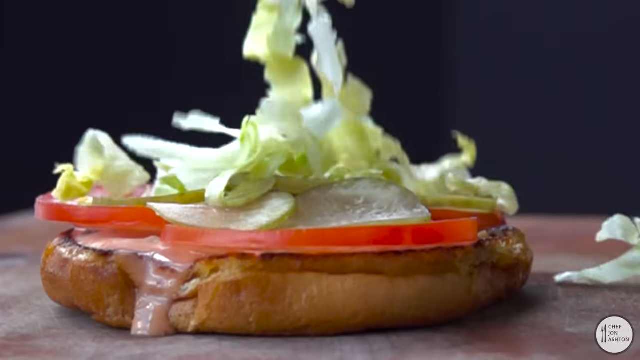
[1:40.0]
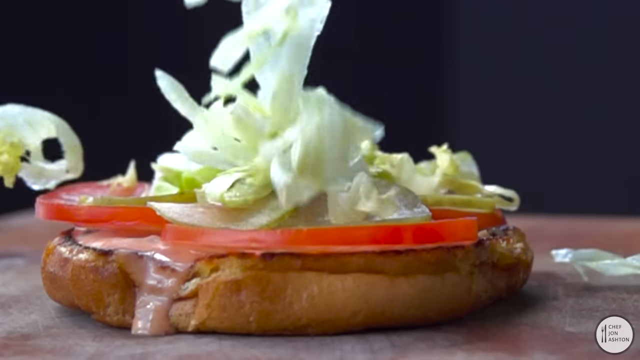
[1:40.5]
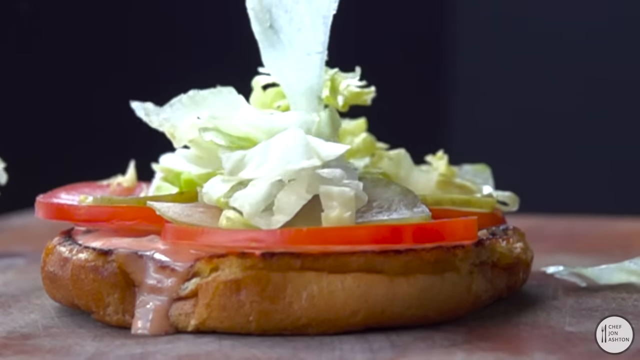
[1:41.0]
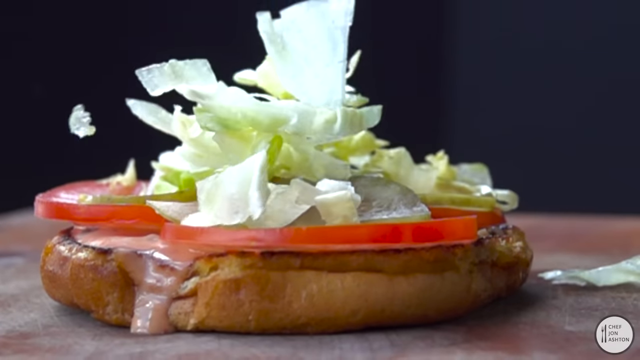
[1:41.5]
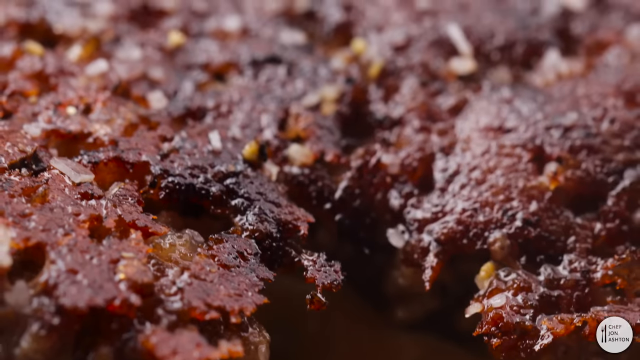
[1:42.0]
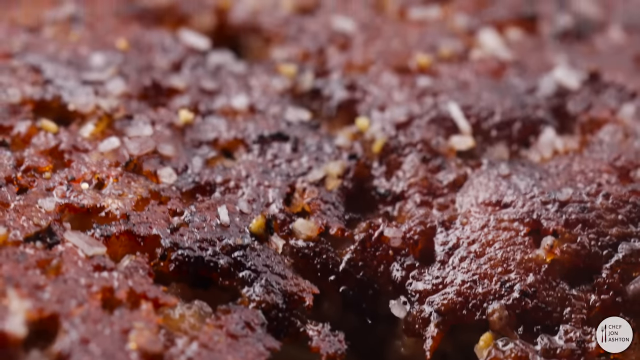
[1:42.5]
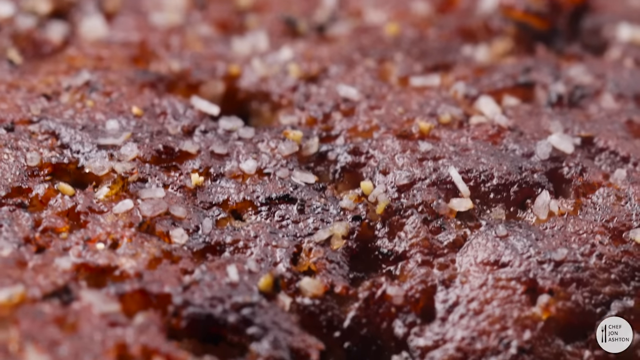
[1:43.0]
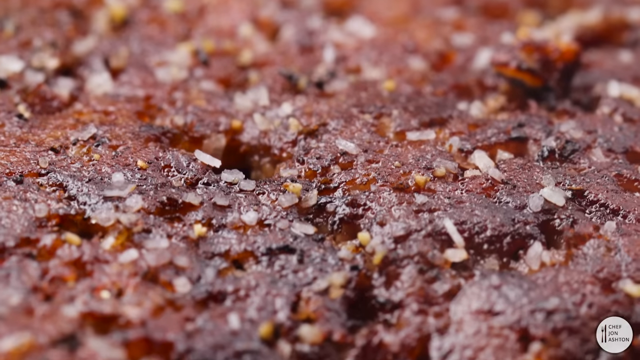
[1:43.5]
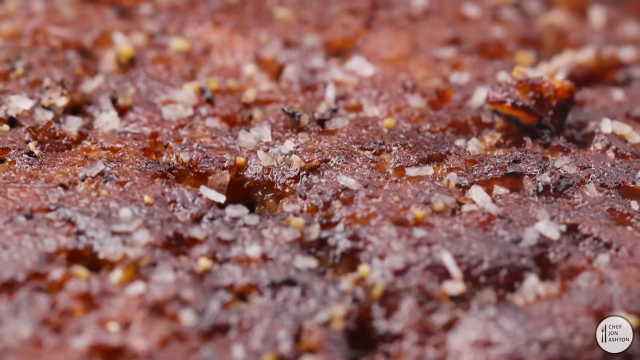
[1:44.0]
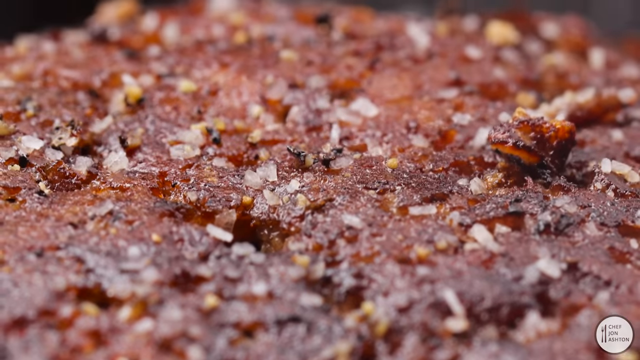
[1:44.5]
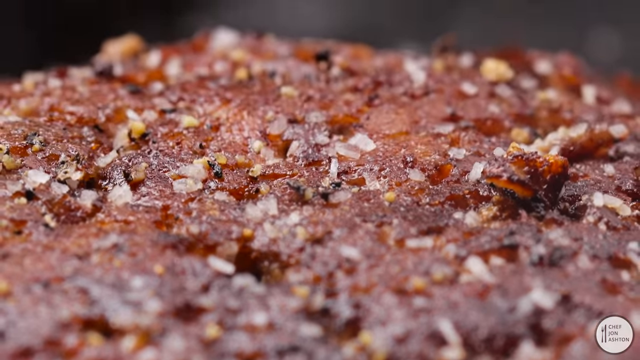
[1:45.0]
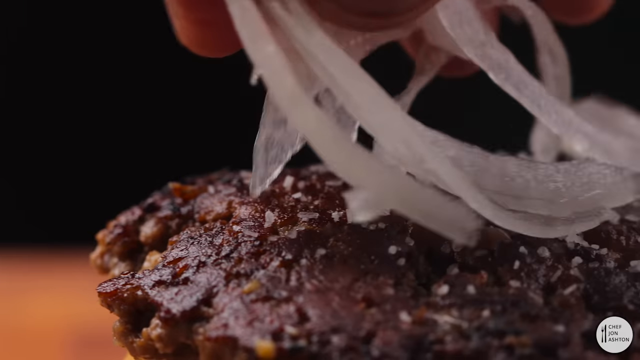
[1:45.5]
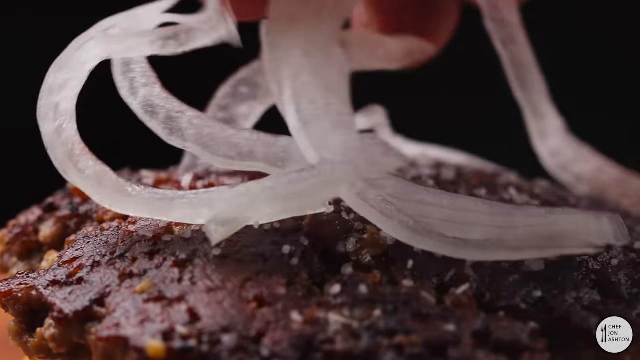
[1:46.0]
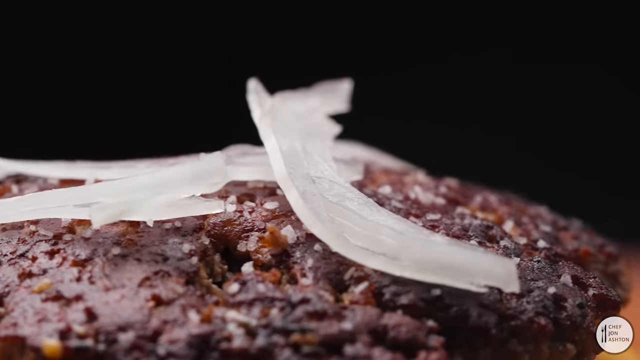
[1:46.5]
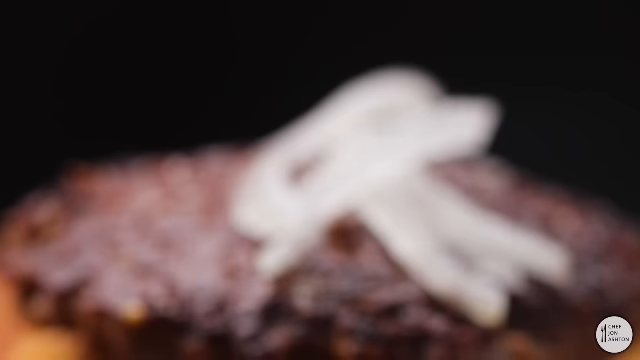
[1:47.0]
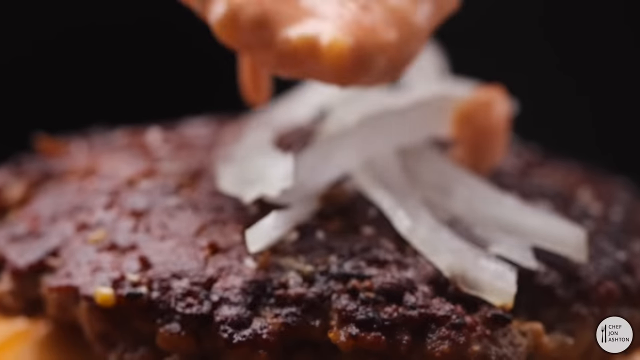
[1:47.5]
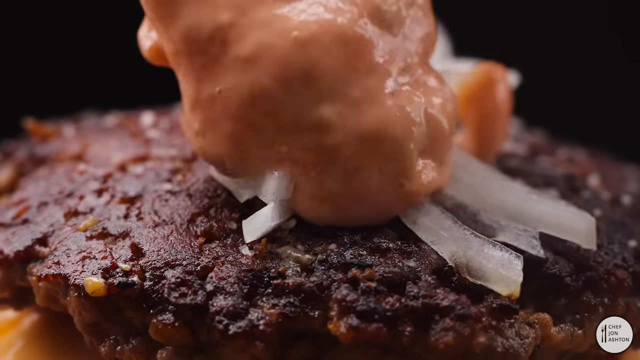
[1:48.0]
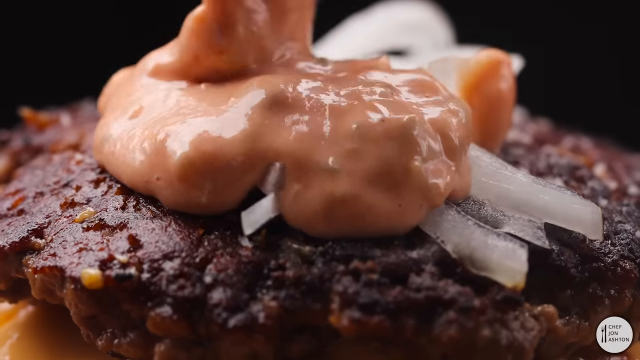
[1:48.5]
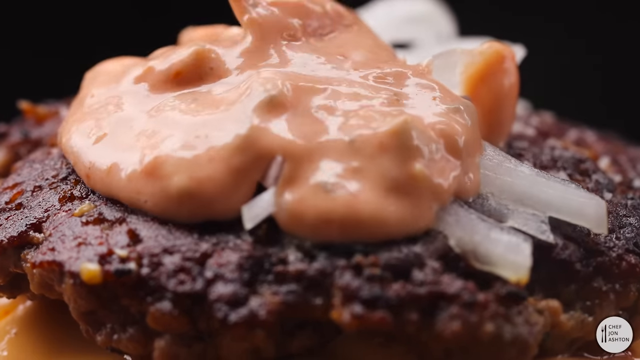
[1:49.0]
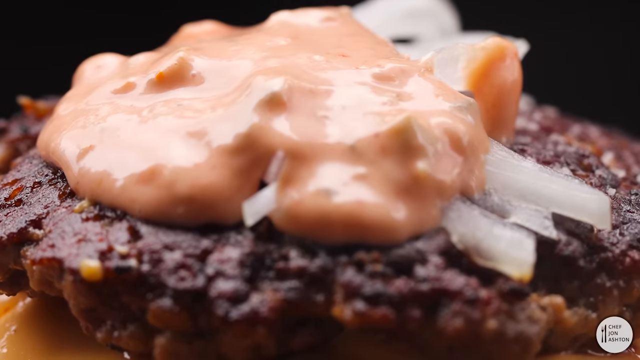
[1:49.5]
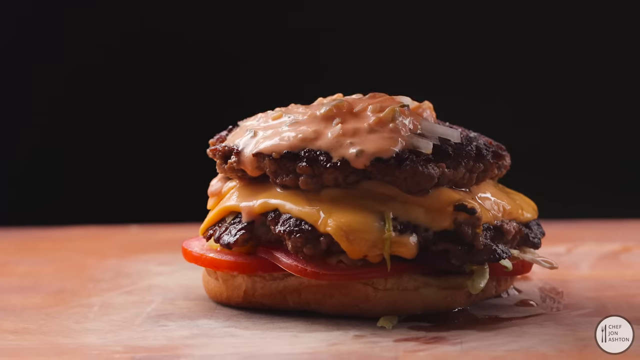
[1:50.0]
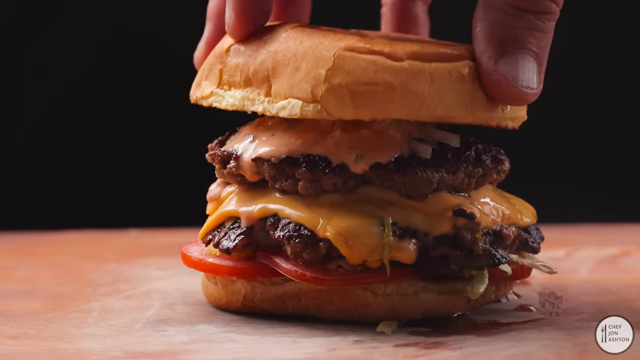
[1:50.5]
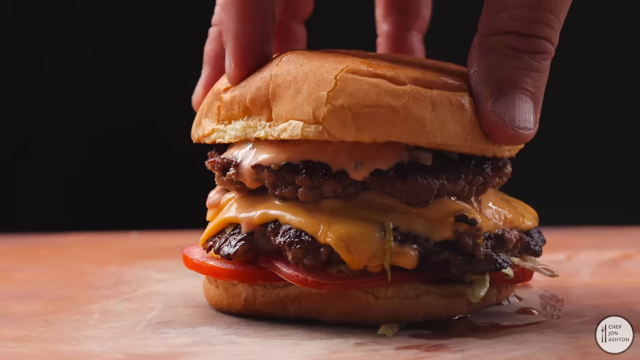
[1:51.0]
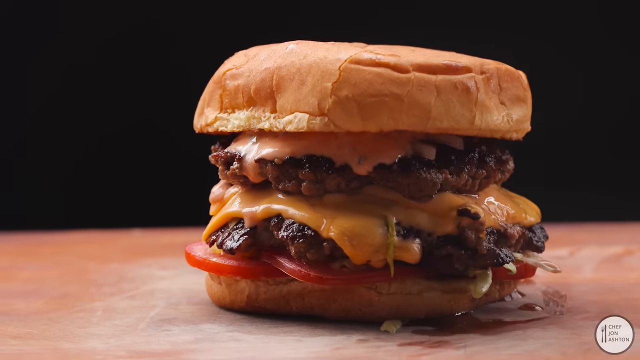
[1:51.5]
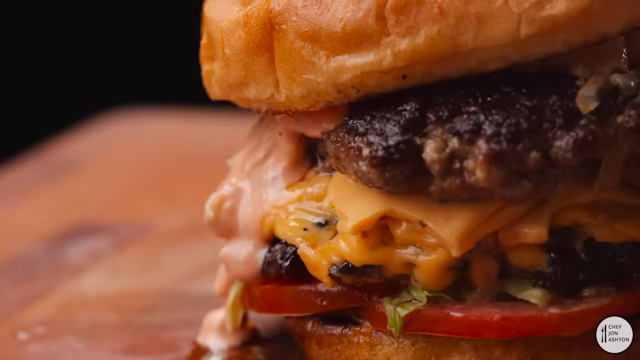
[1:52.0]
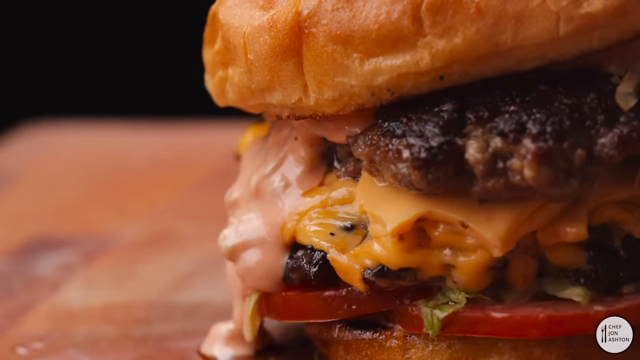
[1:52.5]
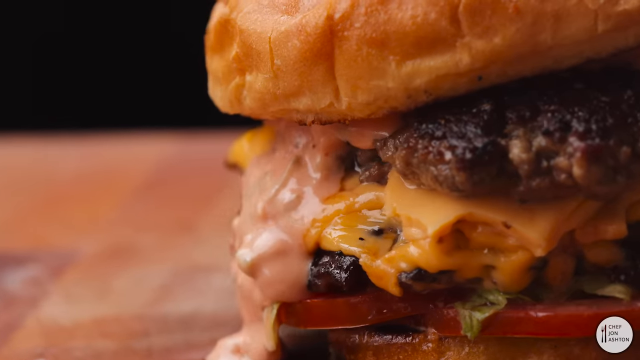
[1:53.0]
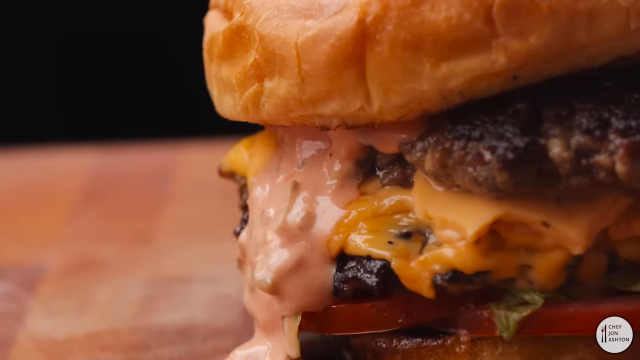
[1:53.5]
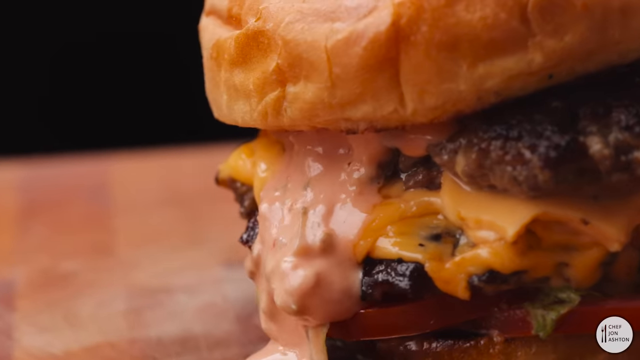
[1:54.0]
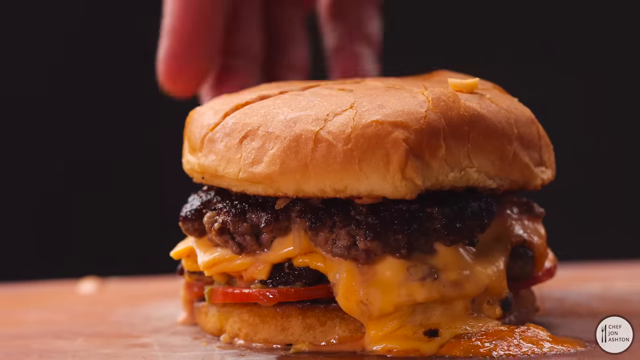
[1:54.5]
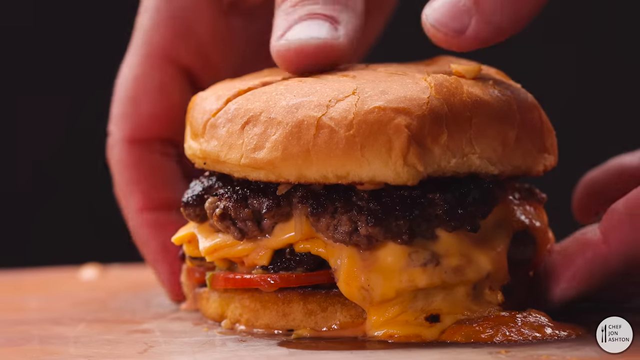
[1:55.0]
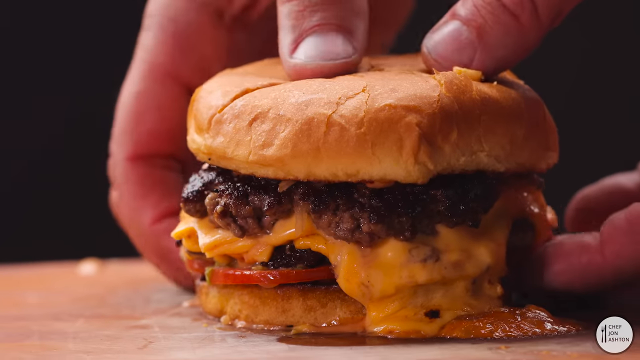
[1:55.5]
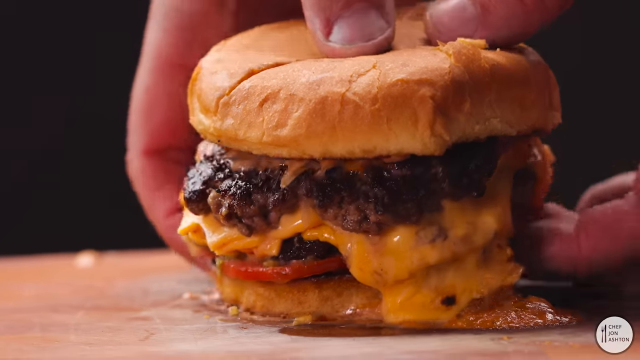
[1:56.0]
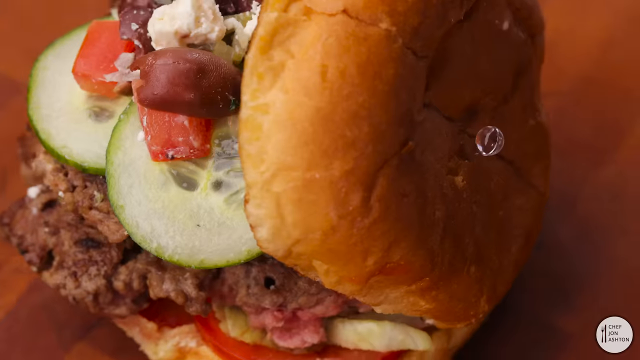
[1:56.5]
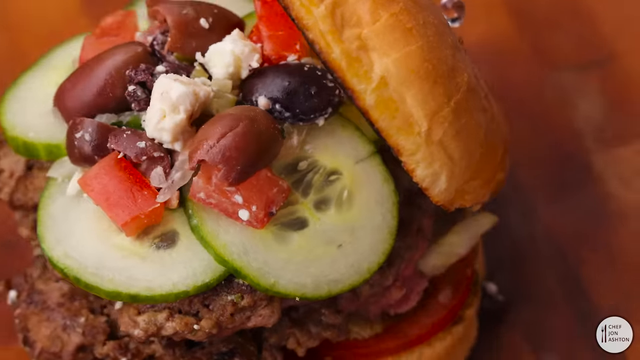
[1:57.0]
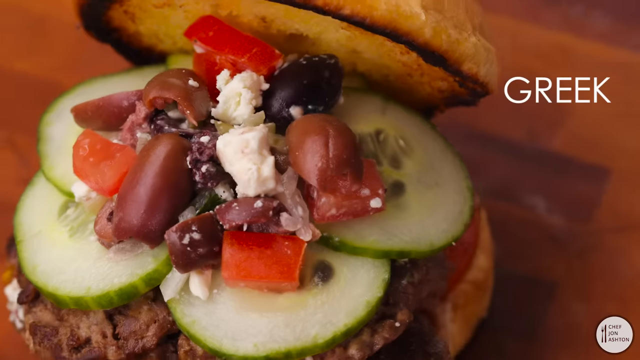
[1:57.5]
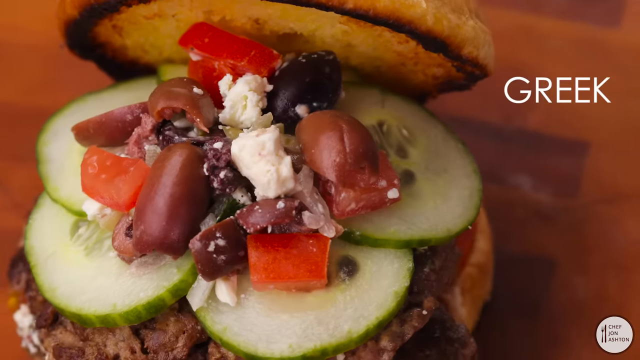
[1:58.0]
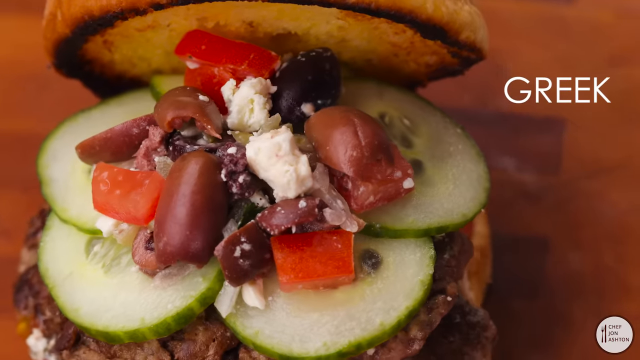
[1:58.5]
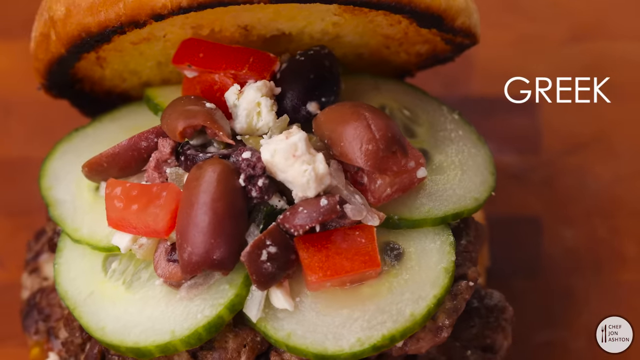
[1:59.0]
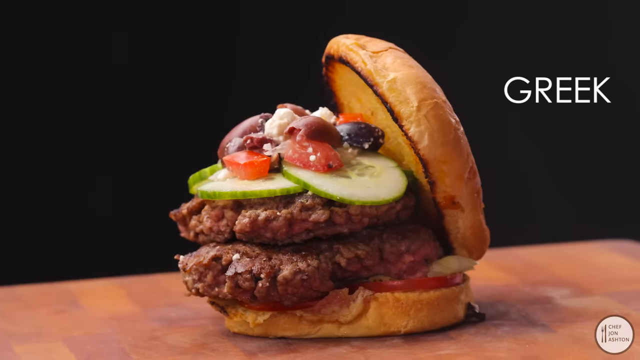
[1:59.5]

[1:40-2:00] Tomatoes, pickles and lettuce are on top, with some kind of gooey-looking, grayish-pink sauce underneath the toppings. A hamburger patty is then shown very close up, with little flakes or granules on top that are either onion or salt. Someone lays down some onion pieces on top of the burger patty, and more are added. More sauce, which looks kind of orangey in this light, is poured on top of the burger patty and the onions. A side view shows the finished cheeseburger with two patties, two slices of cheese, the onions, tomatoes, pickles and lettuce. The top of the bun is set on the burger and pressed down slightly, and some of the sauce runs out of the side. The burger is then shown with the top lifted up a little, revealing other toppings underneath that cannot be made out. In the top right corner, white text reads "Greek."